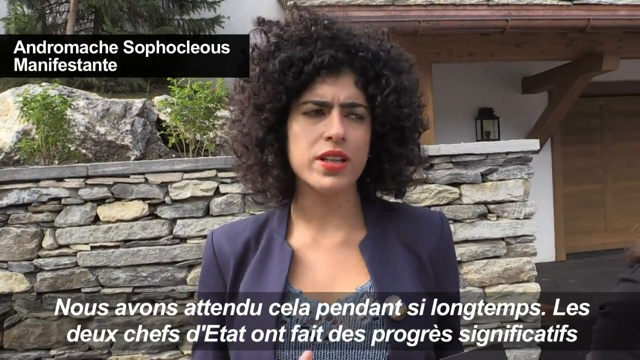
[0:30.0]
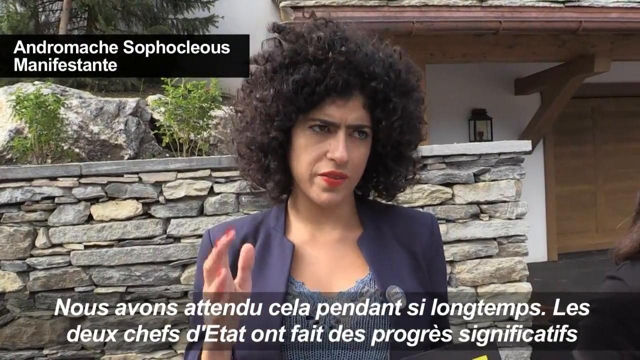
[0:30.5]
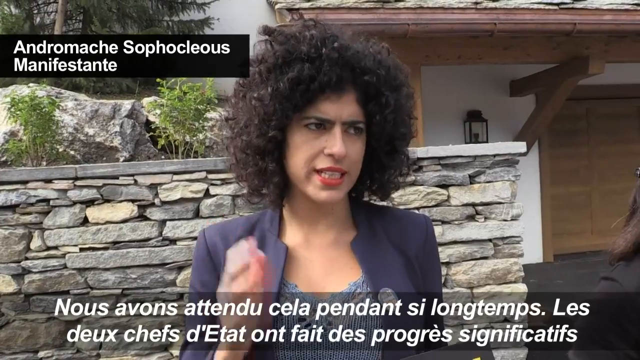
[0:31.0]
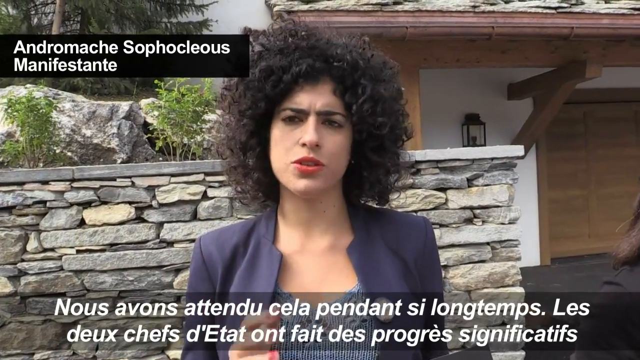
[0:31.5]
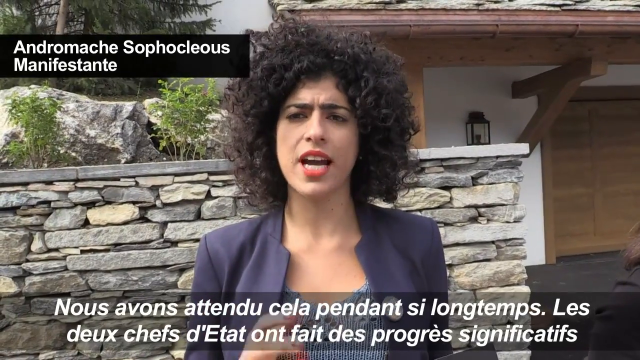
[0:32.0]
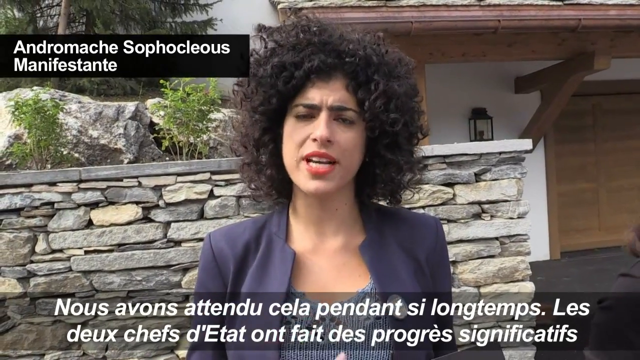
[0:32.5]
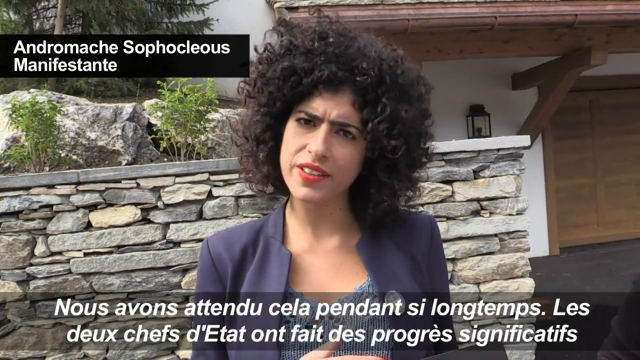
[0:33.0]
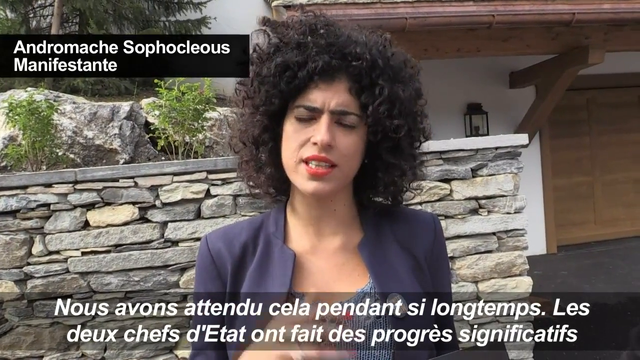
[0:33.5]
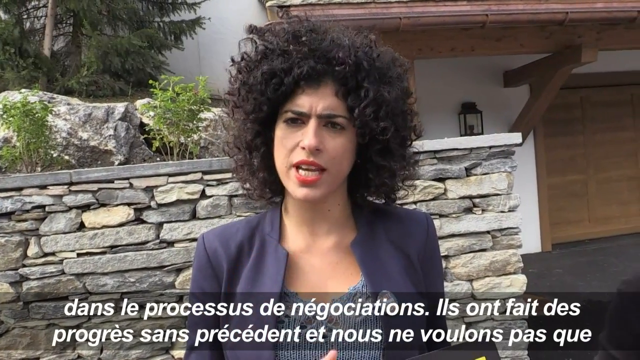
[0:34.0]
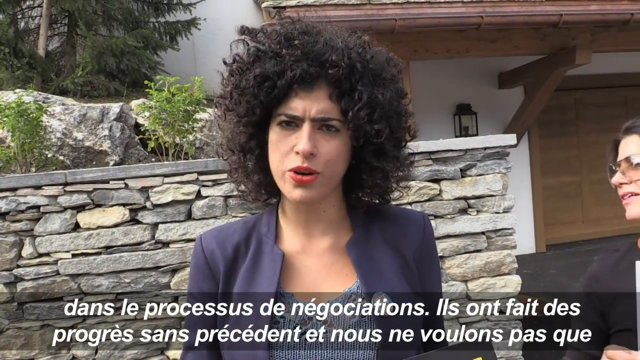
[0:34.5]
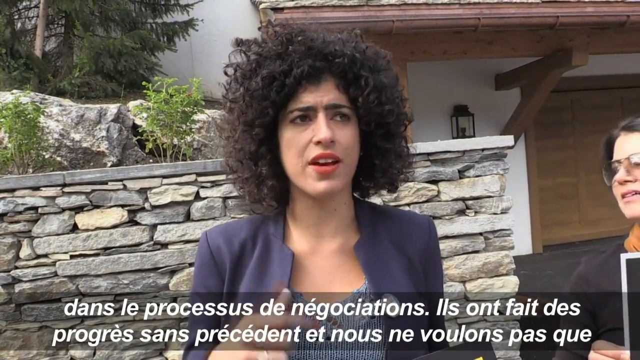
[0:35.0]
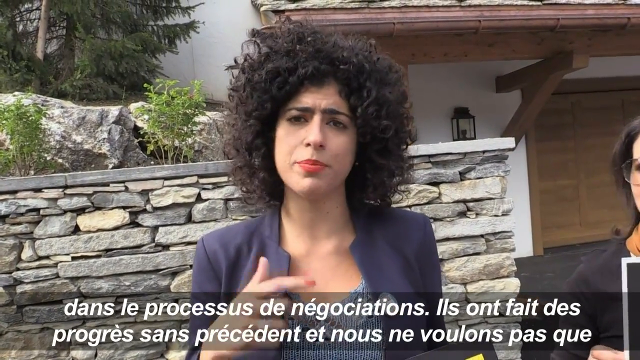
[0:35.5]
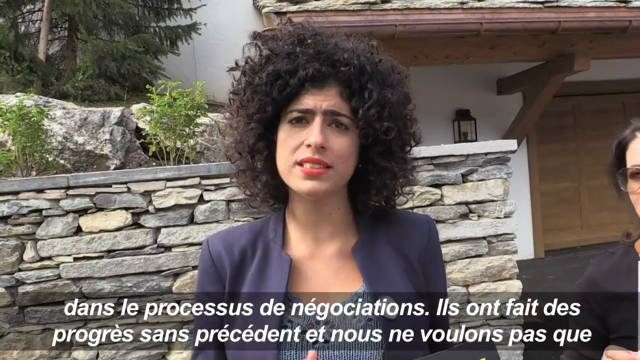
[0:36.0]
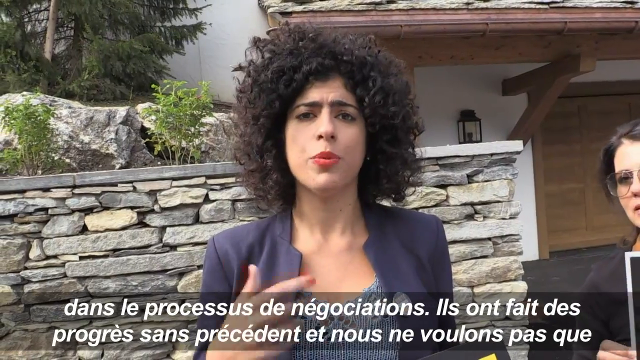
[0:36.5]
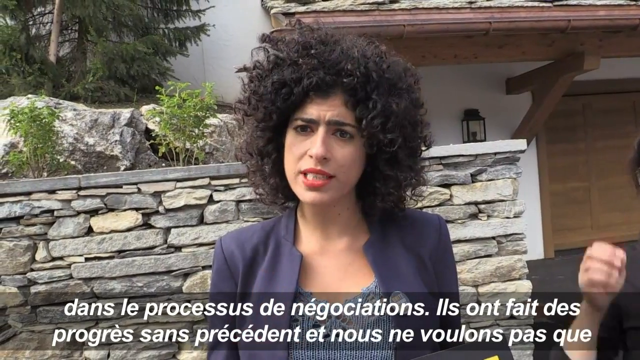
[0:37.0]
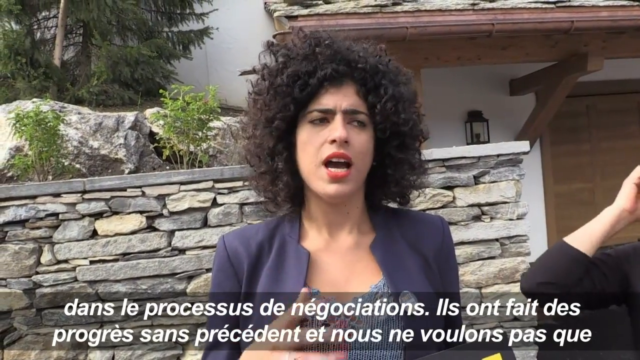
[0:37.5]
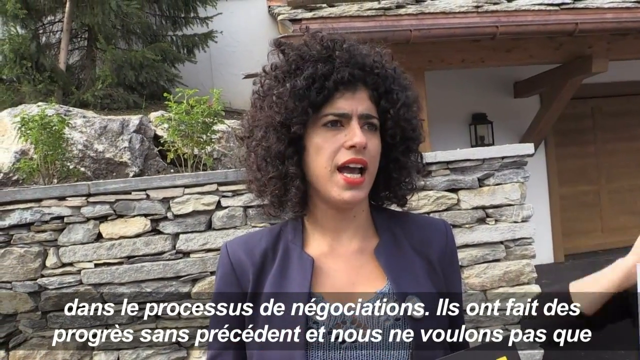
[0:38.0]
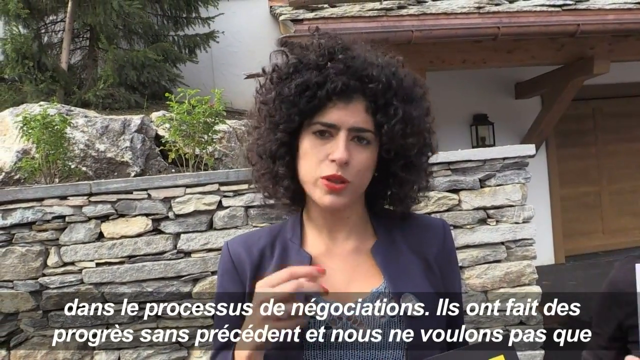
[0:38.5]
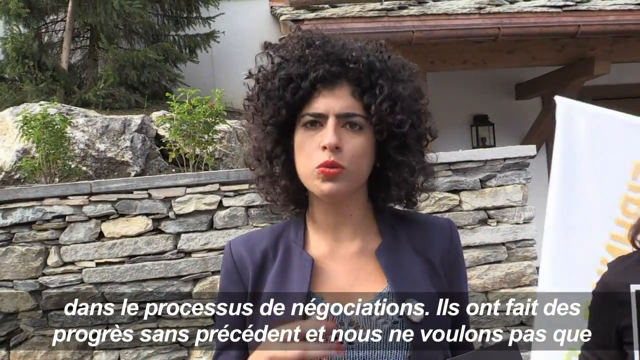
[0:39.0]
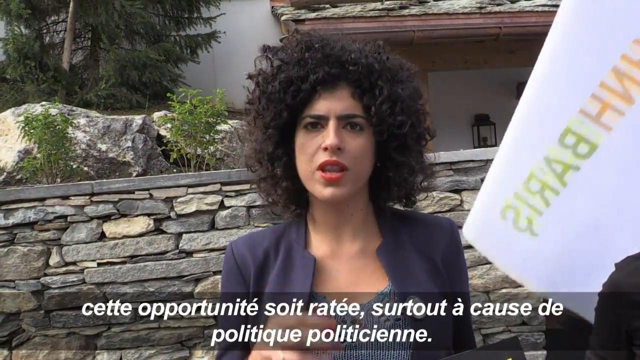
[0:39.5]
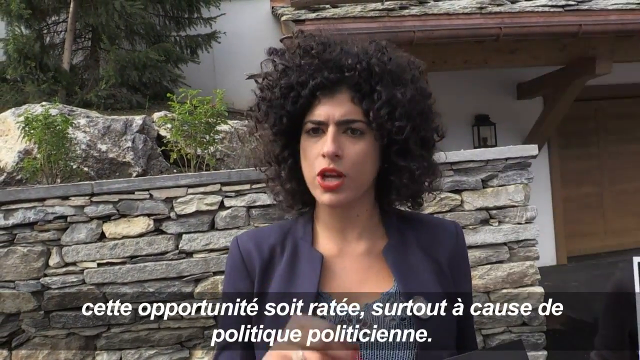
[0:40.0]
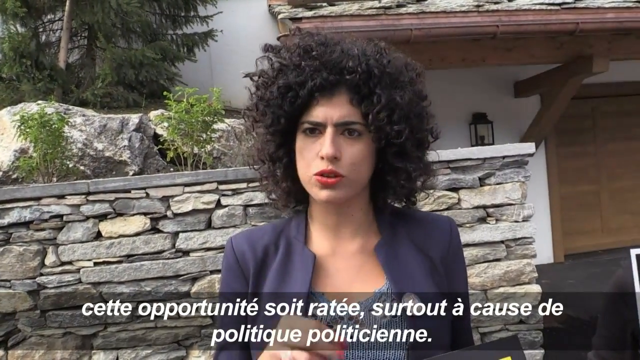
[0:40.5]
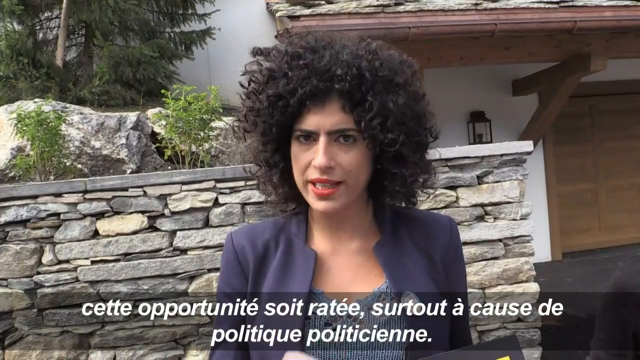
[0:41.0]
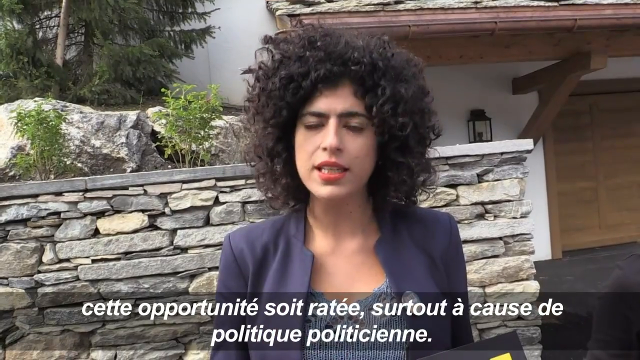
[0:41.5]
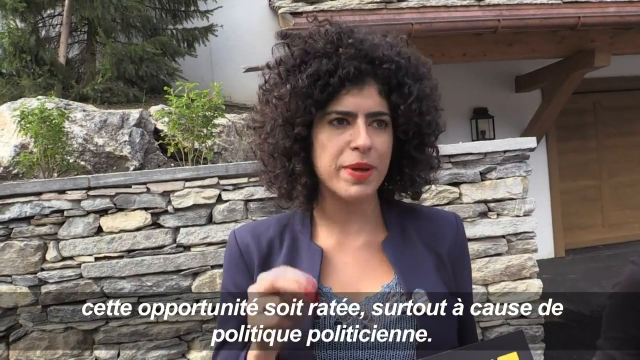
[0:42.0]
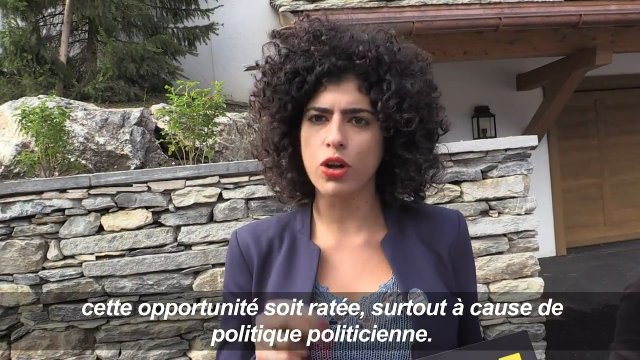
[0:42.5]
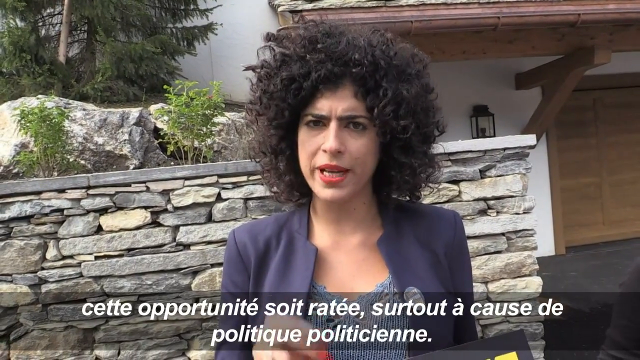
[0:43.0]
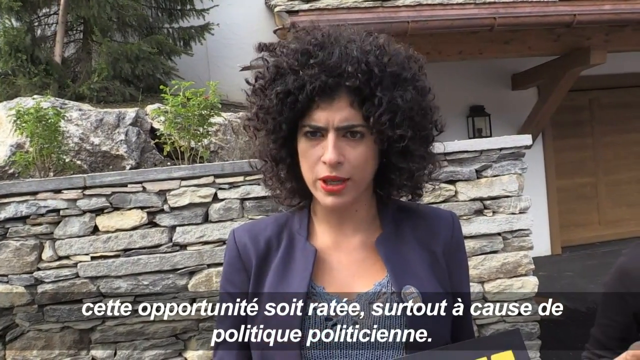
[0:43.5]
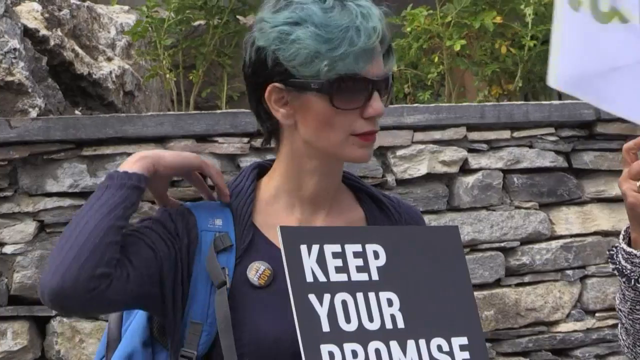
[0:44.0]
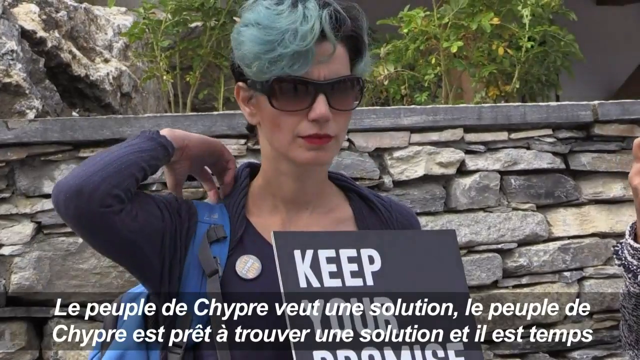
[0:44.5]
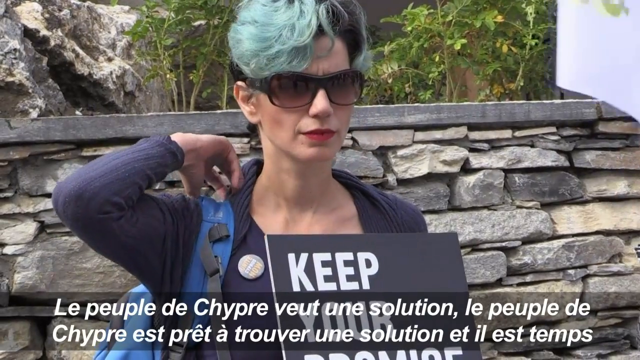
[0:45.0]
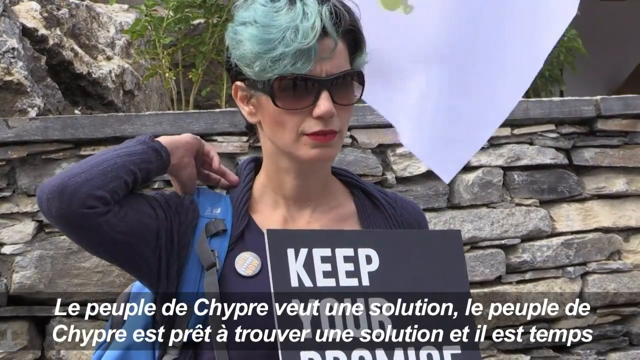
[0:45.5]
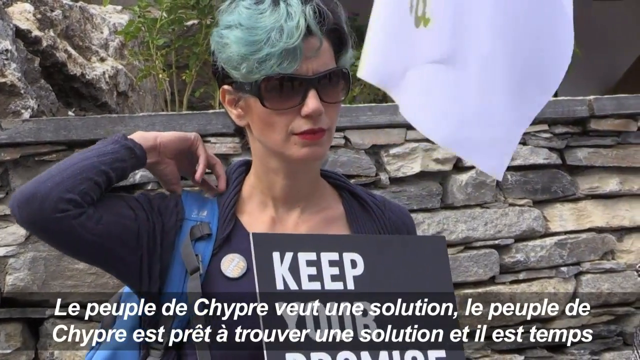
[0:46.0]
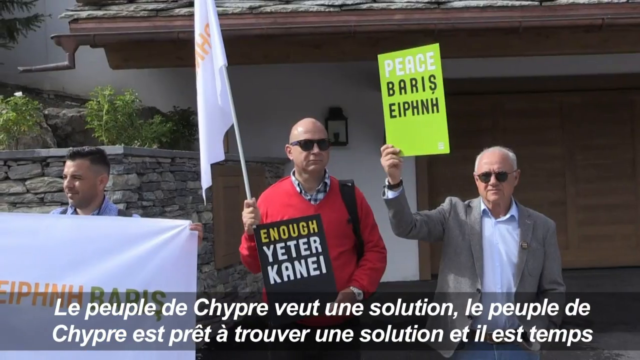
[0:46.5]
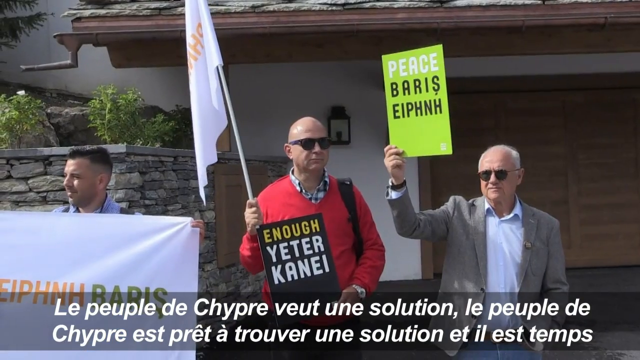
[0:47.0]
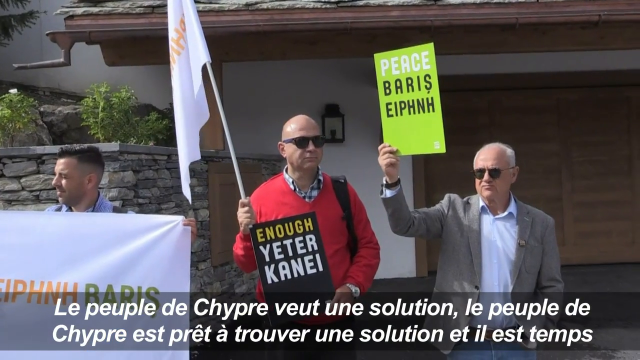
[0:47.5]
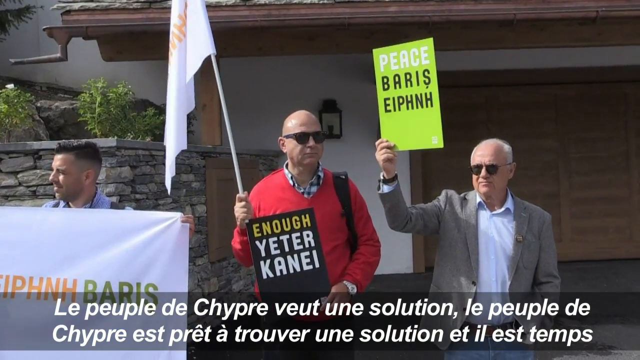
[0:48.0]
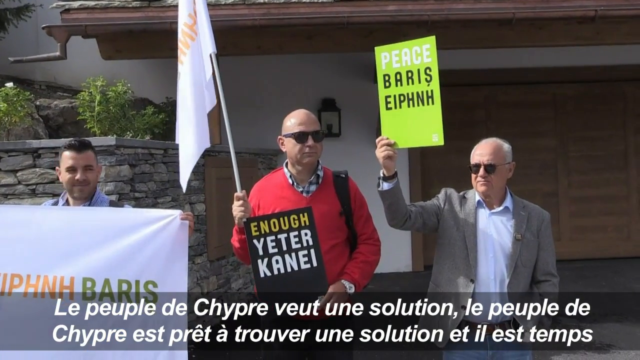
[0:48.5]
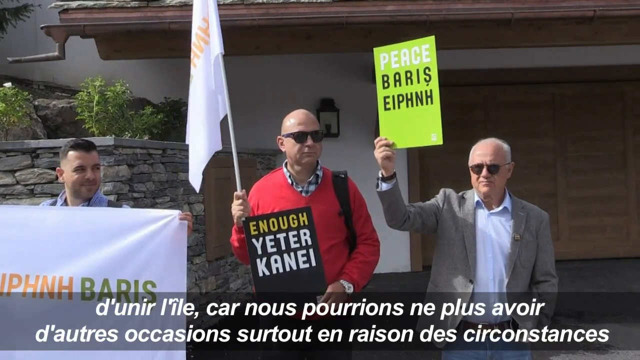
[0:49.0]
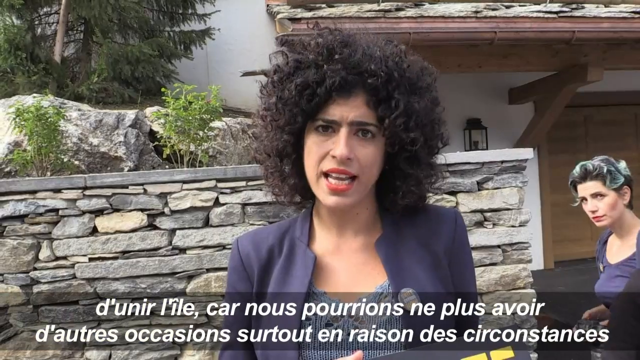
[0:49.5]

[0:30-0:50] Outside the building, a woman with lots of dark curly hair and light olive skin speaks quite emphatically, looking even angry, raising her right hand up and down to make points. The next shot shows two protesters: a white woman with straight reddish hair, wearing a black and white jacket and holding a white flag and a black sign that says "Solution now", and a white man with grayish hair in a long-sleeved red T-shirt and black vest, apparently wearing a backpack. The reporter or spokesperson is back on screen, emphatically making points with her right hand; the camera does not move while she moves her head and her hand up and down. Someone comes into view waving a white flag and steps back out, with only the flag visible. Next is a younger woman with light teal and black hair and dark sunglasses, wearing a purple sweater; her right hand is lifted to her shoulder as she adjusts a backpack strap, and she holds a black sign that begins "Keep your". The next shot shows three men: one holds a white banner, one holds a white flag and a small black sign that says "Enough", and the third, middle-aged to in his 60s and balding with gray hair, wears a light gray suit jacket and light-colored shirt and has a sign that says "Peace", "BARIS" and "EIPHNH". In the final second, the dark-haired spokesperson or reporter speaks emphatically into the camera.